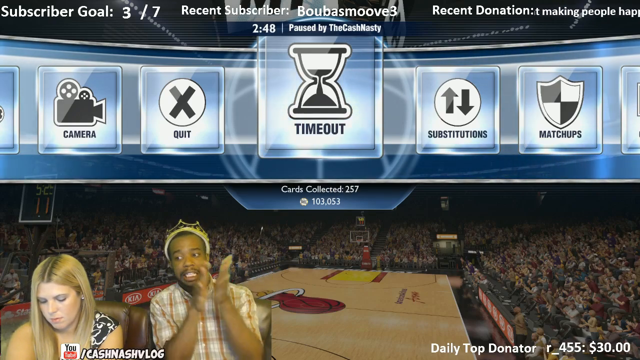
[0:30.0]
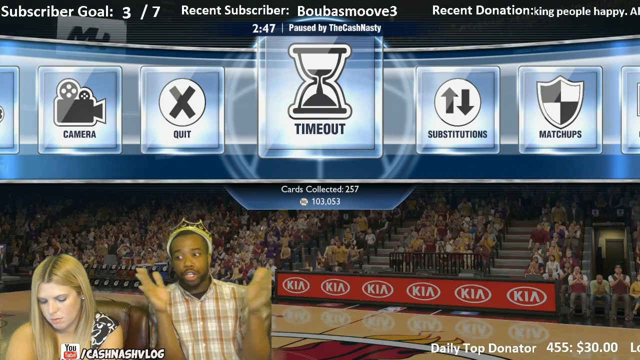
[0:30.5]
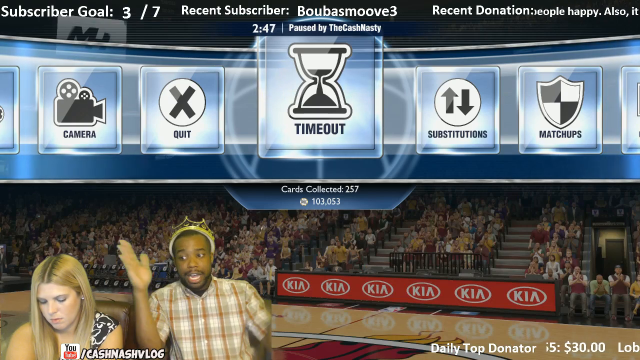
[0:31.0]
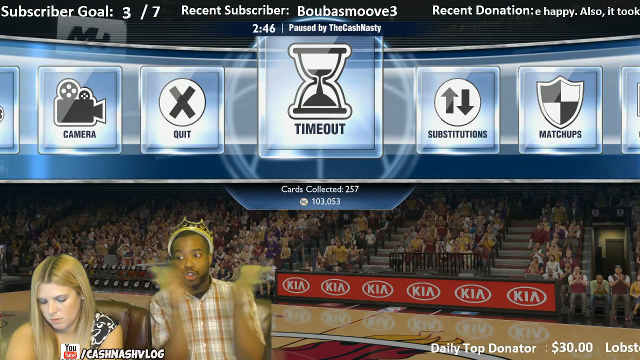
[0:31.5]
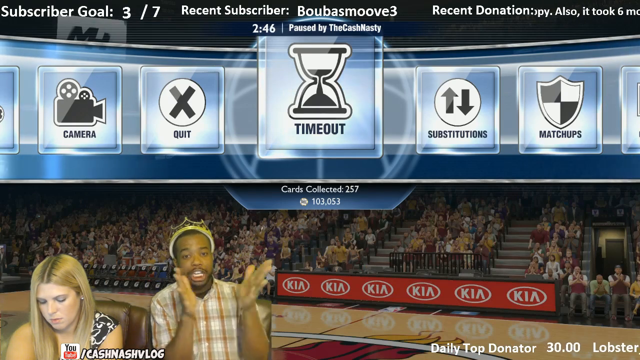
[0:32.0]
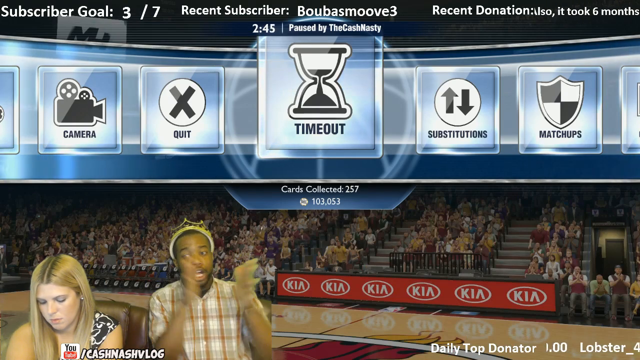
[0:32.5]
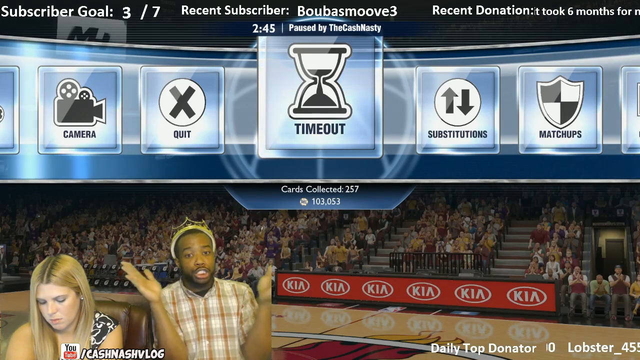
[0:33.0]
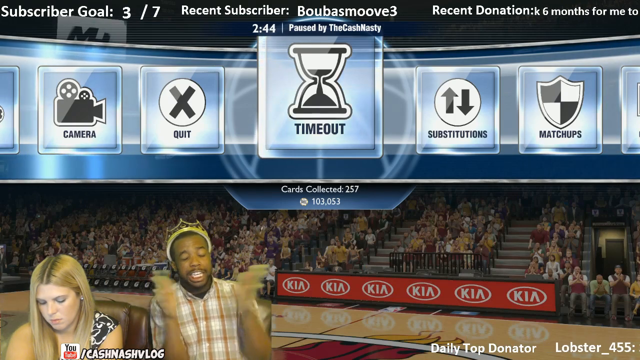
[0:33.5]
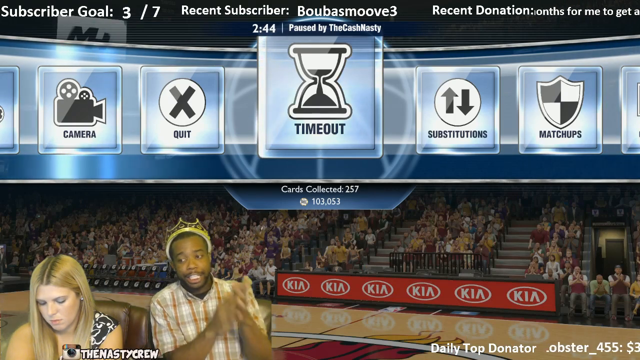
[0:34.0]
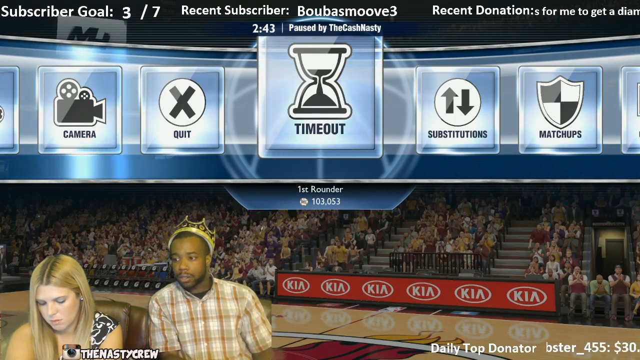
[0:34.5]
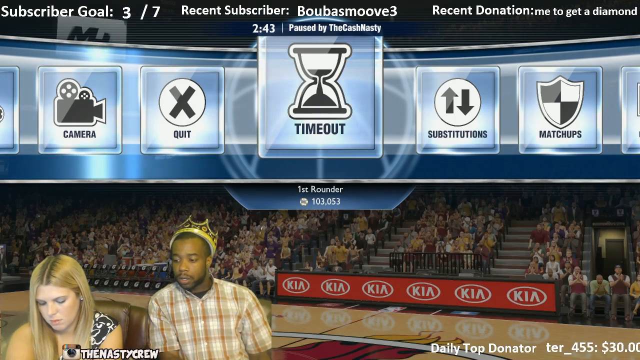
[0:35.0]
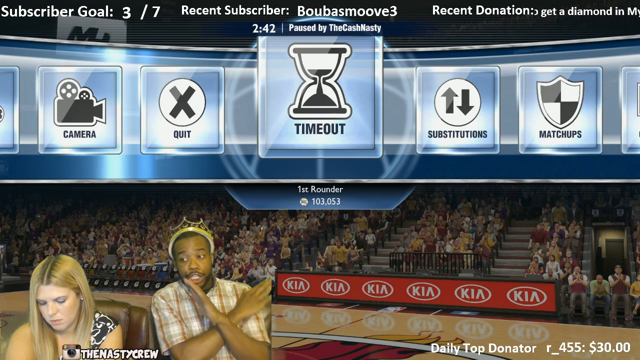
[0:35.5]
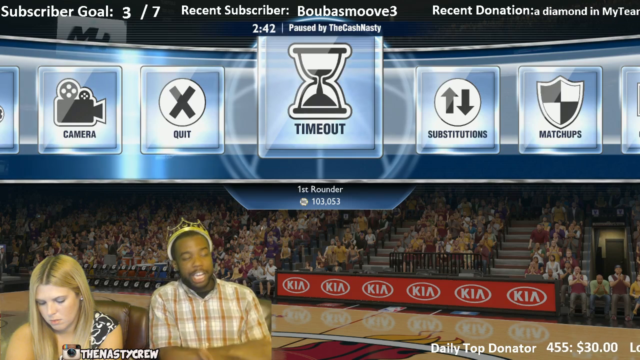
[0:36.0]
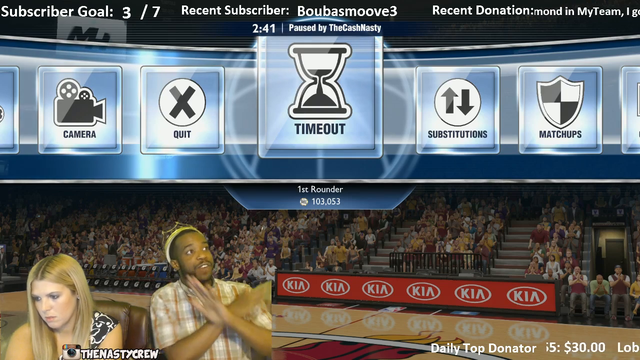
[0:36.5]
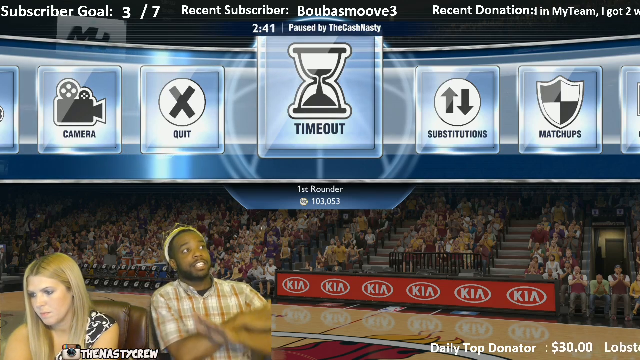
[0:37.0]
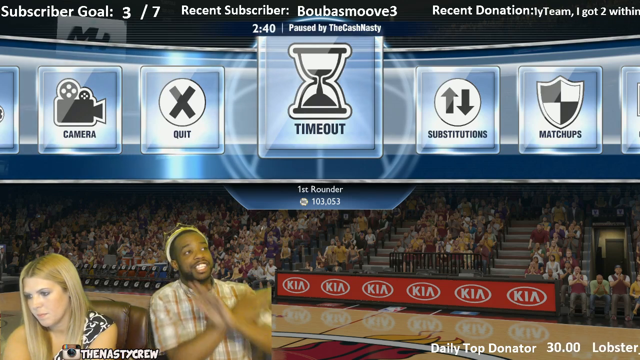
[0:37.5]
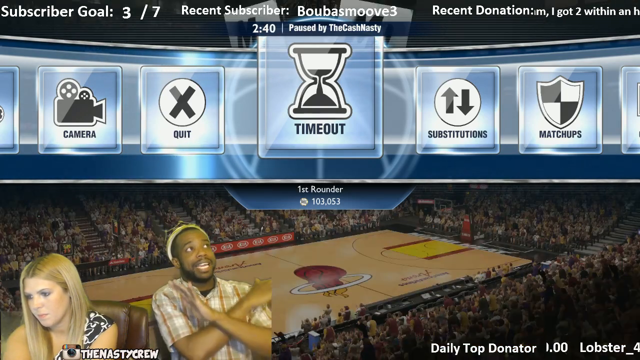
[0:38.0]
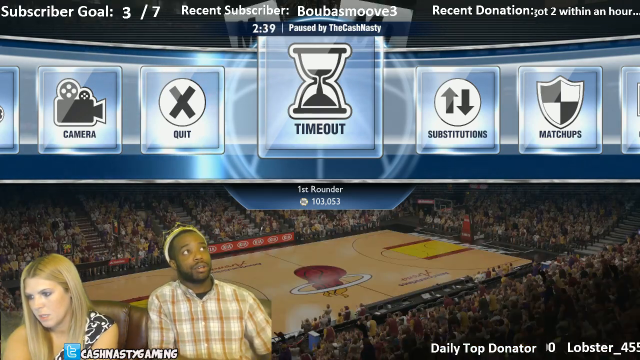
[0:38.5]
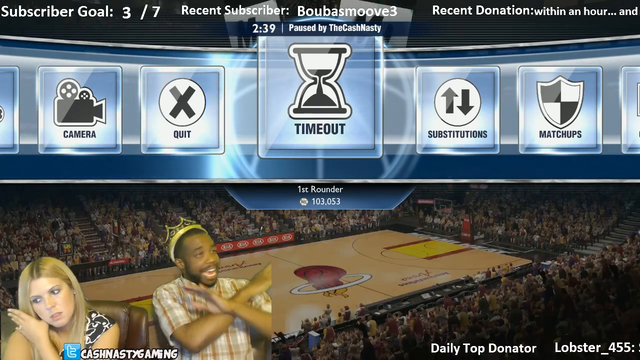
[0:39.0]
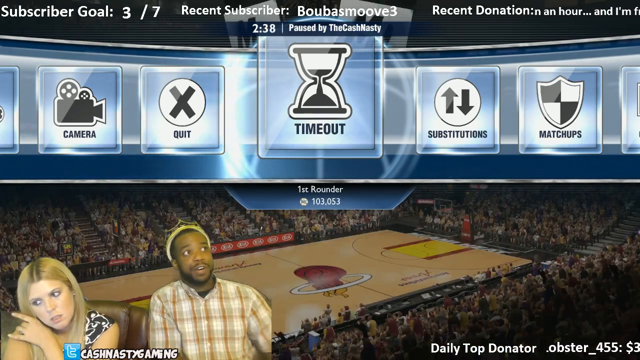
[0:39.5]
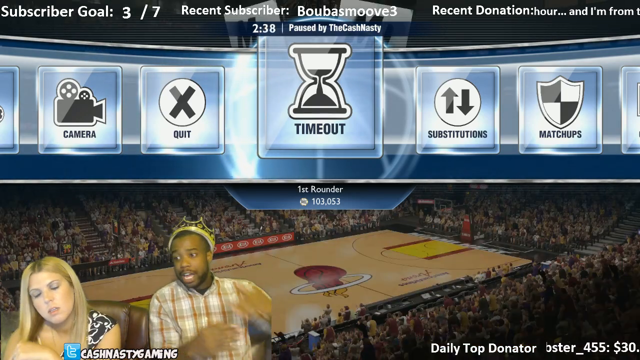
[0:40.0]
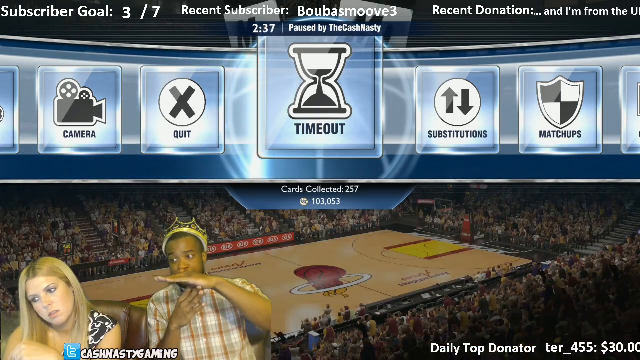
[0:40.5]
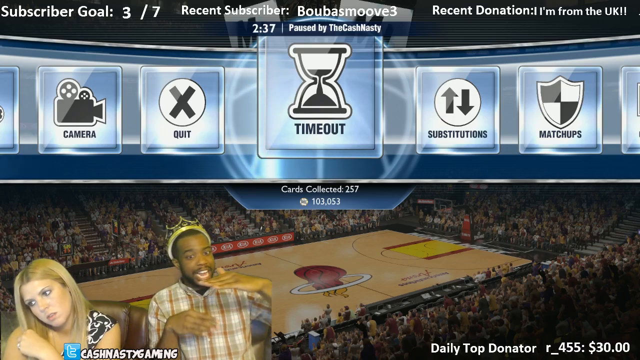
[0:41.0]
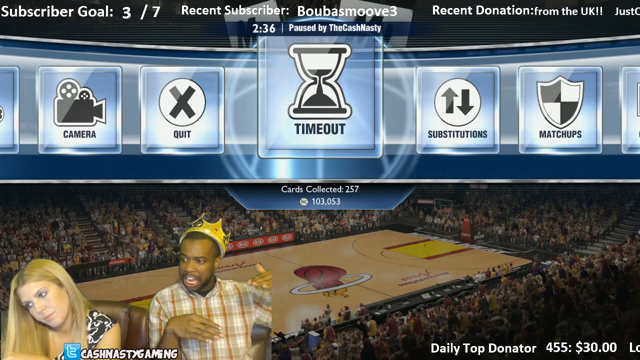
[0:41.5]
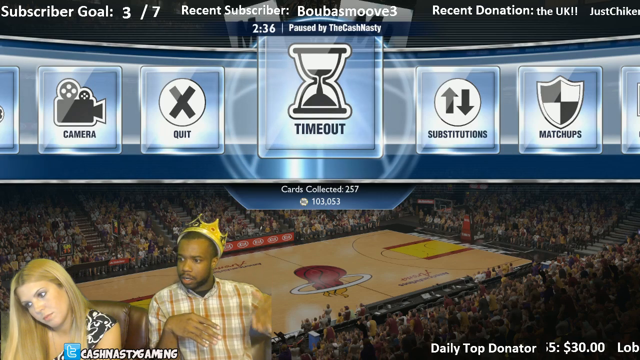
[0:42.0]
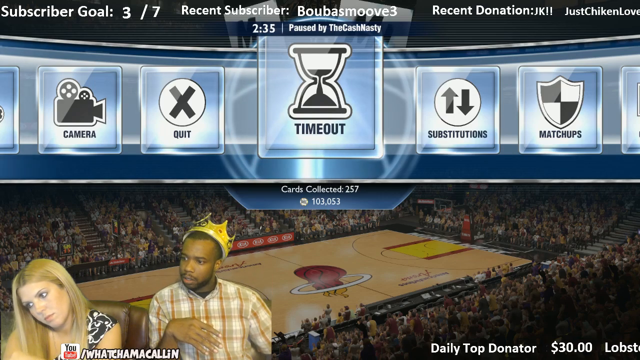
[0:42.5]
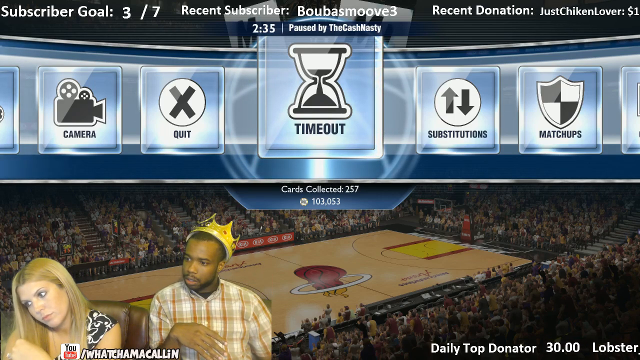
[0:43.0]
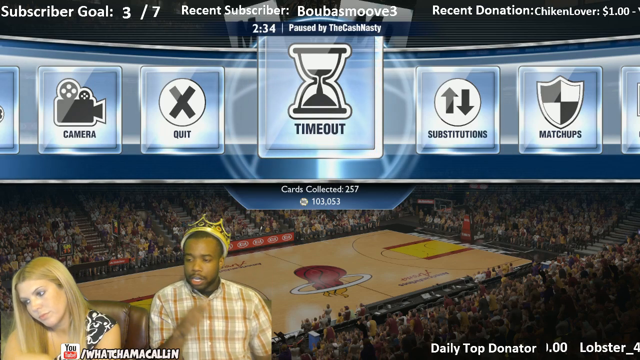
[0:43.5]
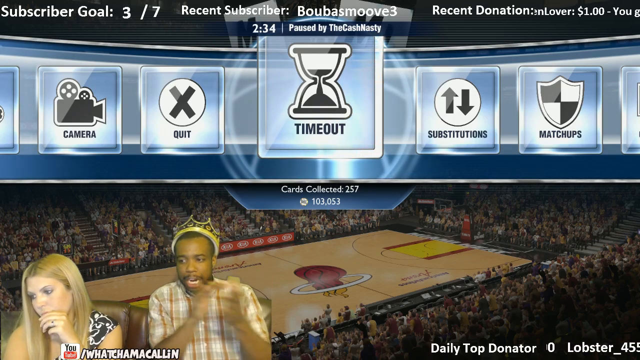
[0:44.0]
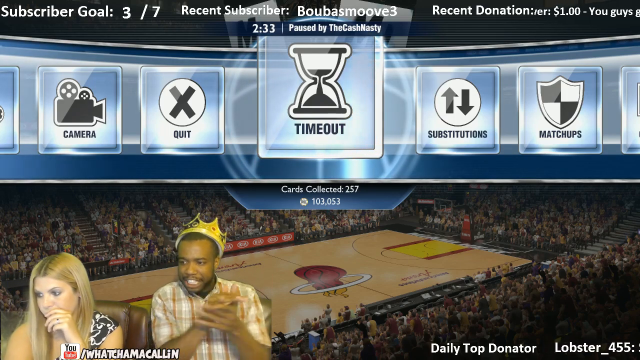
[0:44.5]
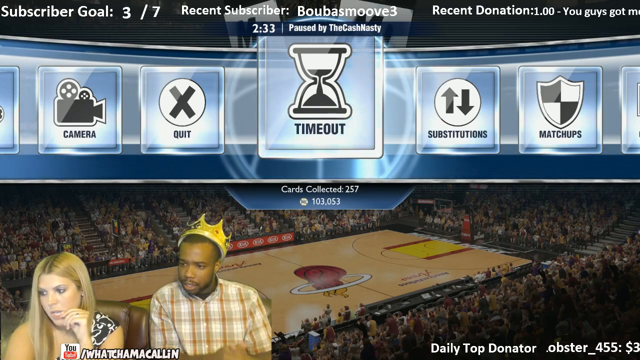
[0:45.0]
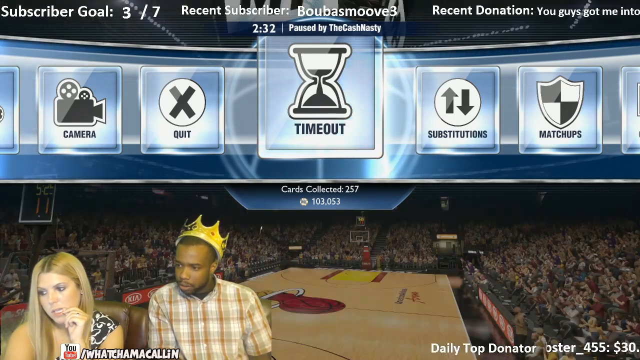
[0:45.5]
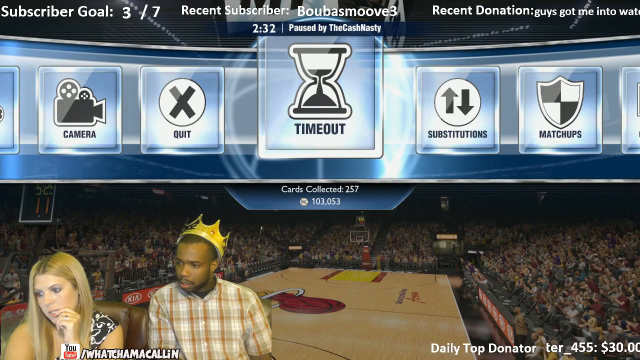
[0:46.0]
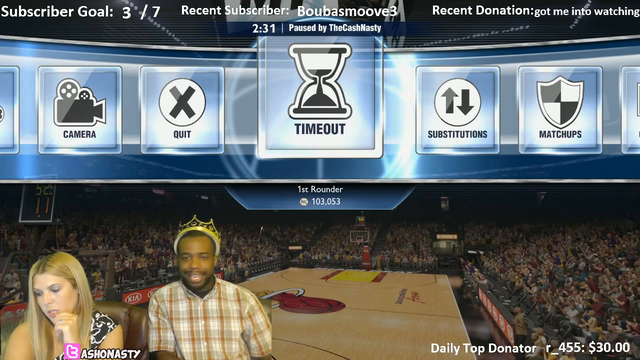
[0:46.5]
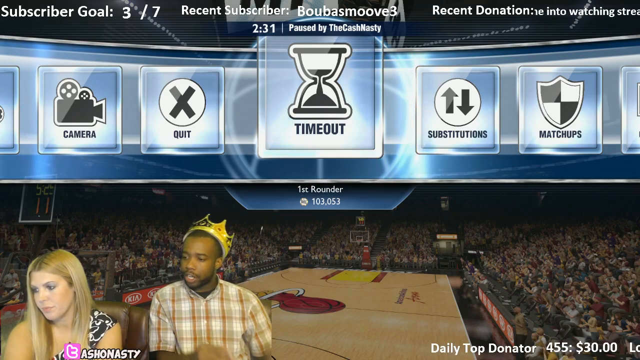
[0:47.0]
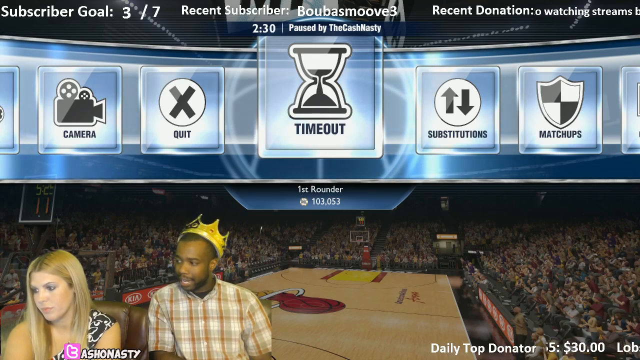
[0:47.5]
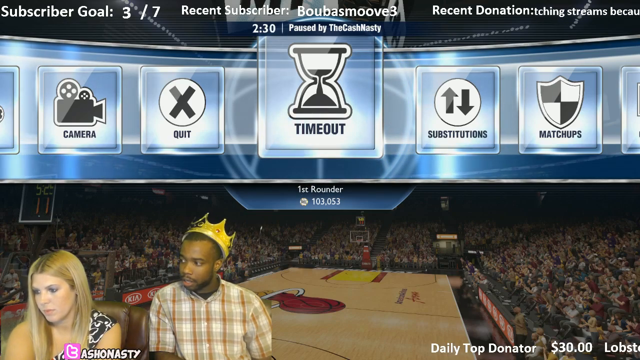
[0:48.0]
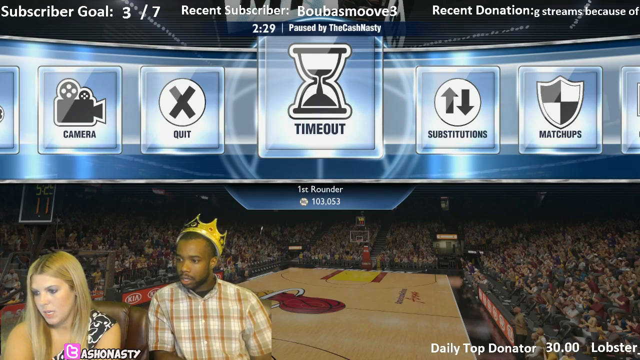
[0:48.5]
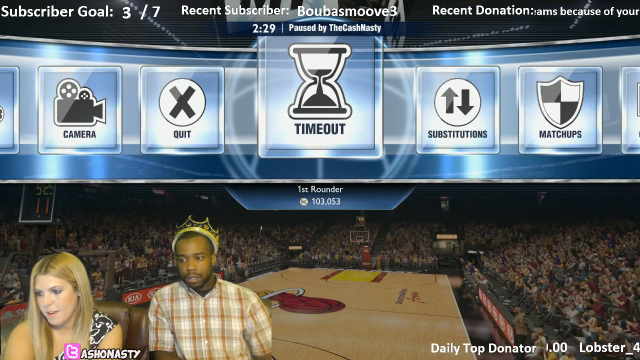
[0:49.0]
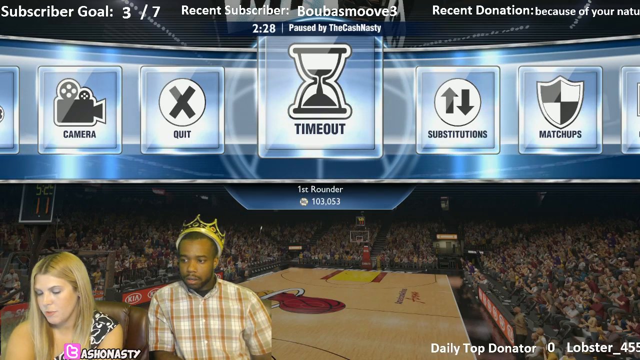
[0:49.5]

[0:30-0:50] The man on the right side of the screen seems to clap his hands back and forth as a recent donation banner on the right side moves from right to left. He keeps talking, and his hands go into an X motion; he seems visibly upset. In the center of the screen is a first rounder indication with an income of $103,053,000, and it shows cards collected of $257,000. He looks from right to left across the screen. Both people seem to be looking and clapping at the same time. The woman seems to wear purple eyeliner and is looking at the screen to the right side. The man wears a plaid shirt. He seems to make a T with his hands for a timeout. In the top right, it appears that chicken lover donated $1 to the stream.